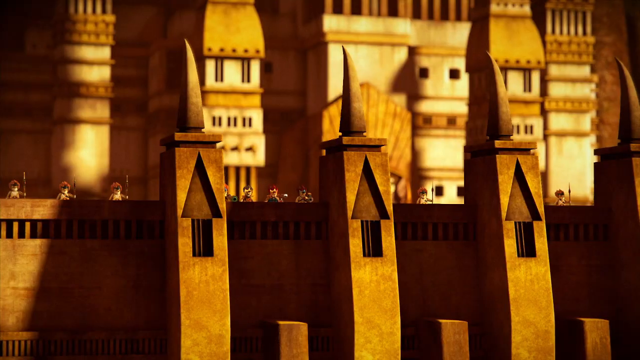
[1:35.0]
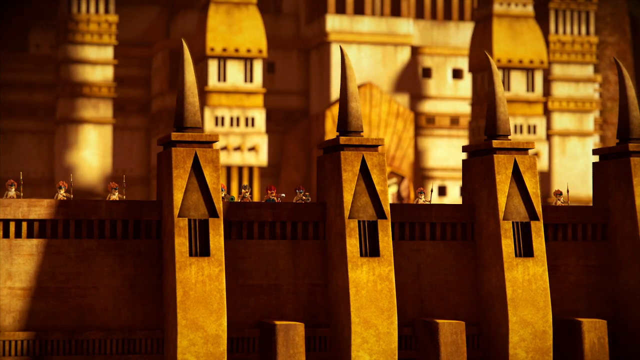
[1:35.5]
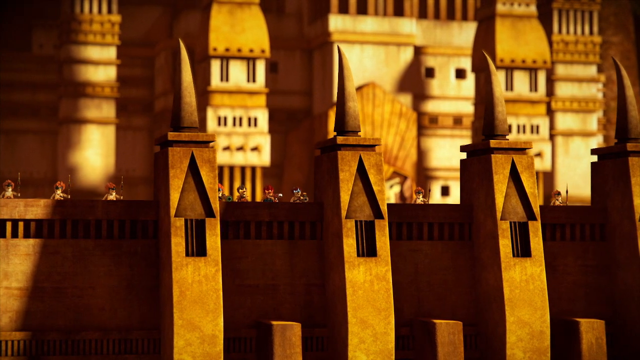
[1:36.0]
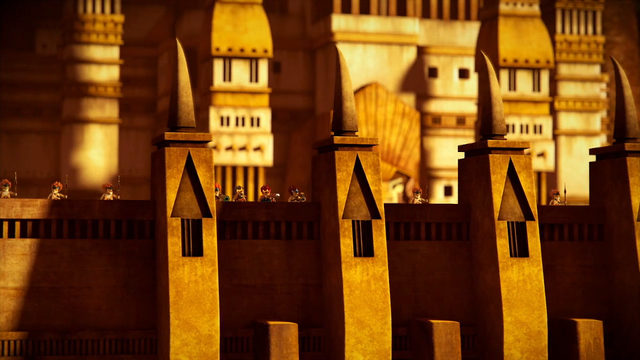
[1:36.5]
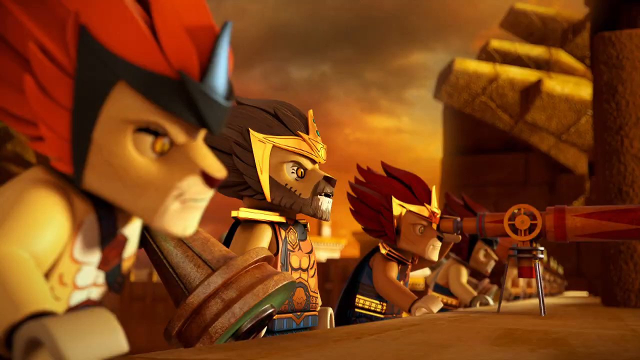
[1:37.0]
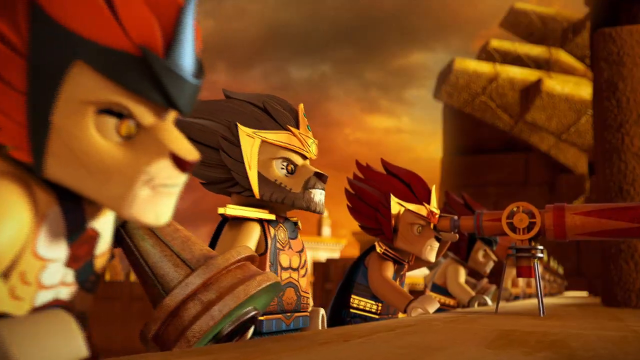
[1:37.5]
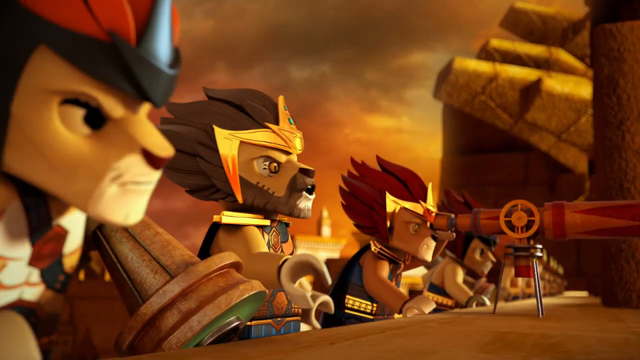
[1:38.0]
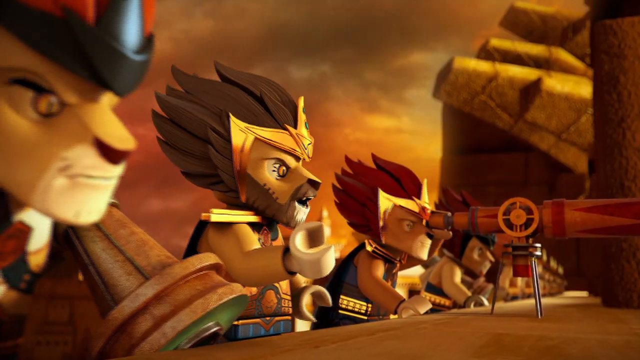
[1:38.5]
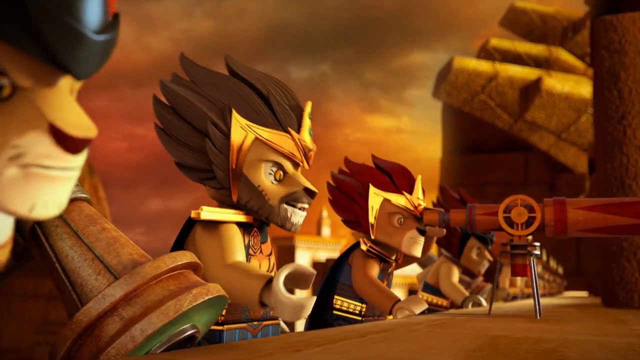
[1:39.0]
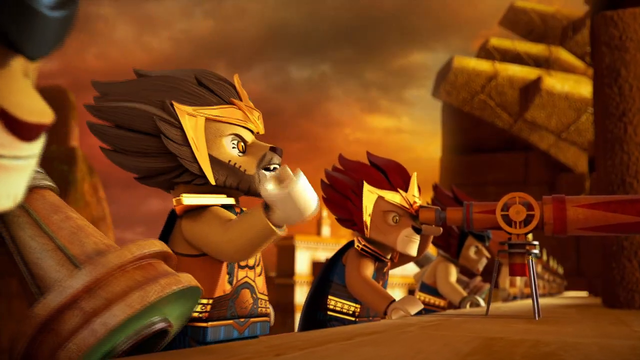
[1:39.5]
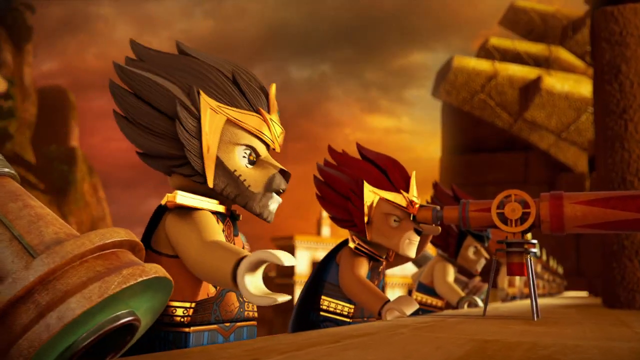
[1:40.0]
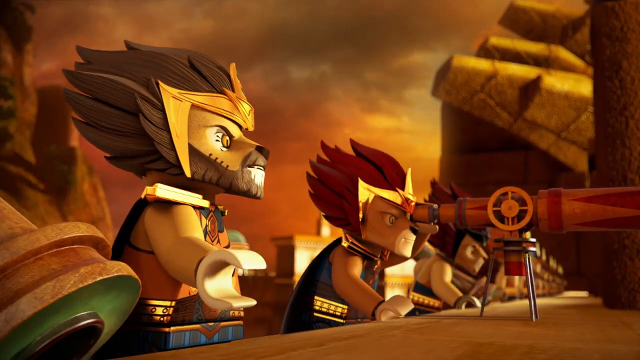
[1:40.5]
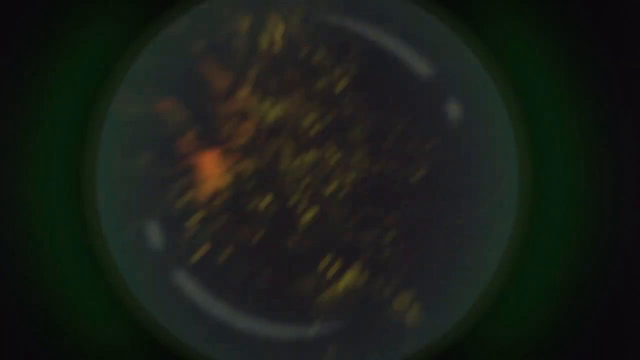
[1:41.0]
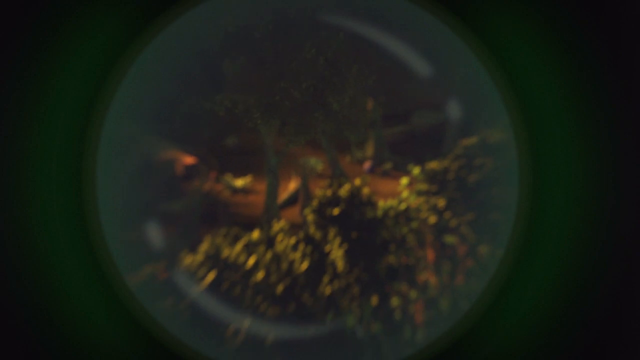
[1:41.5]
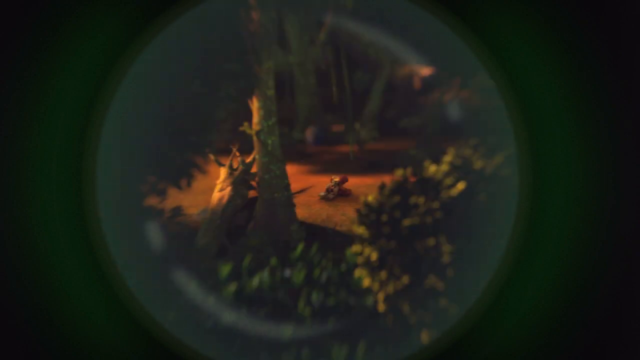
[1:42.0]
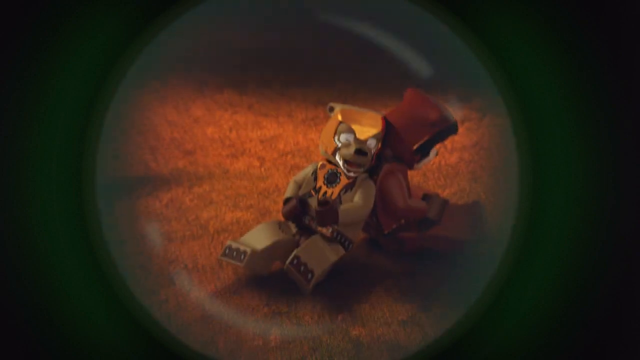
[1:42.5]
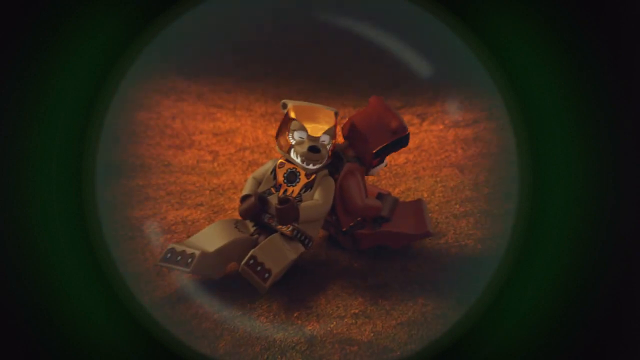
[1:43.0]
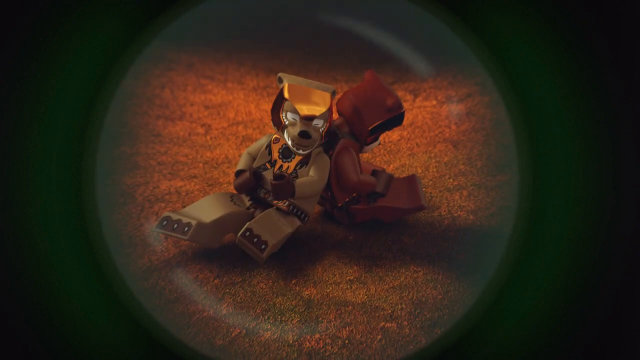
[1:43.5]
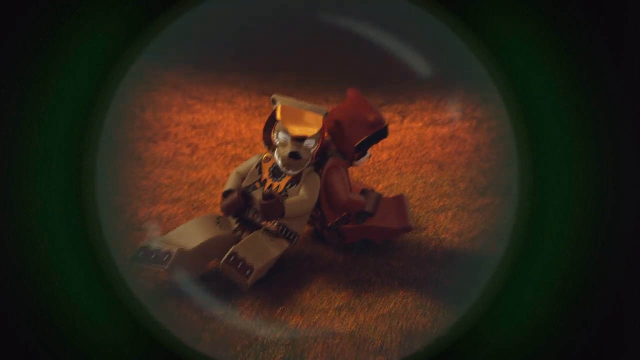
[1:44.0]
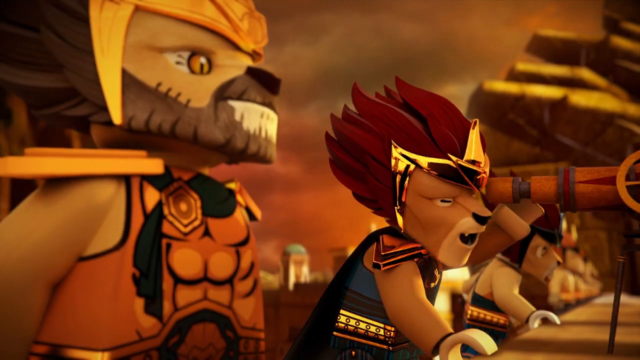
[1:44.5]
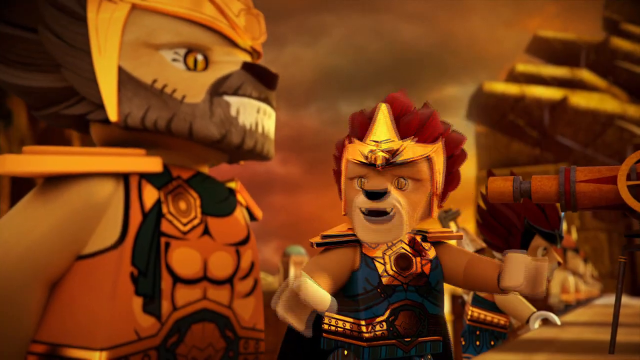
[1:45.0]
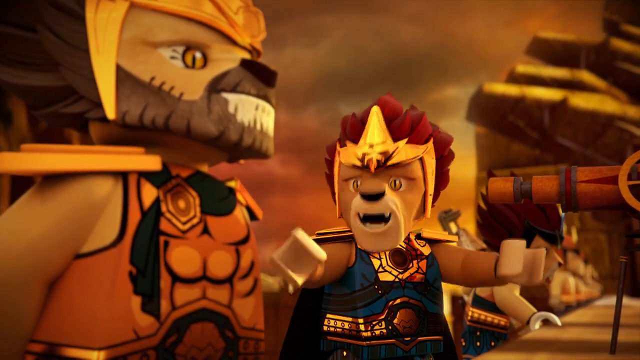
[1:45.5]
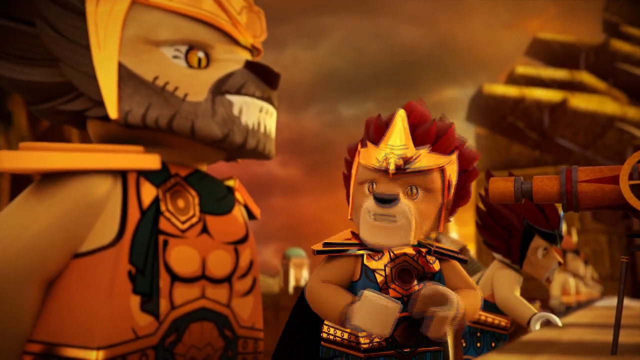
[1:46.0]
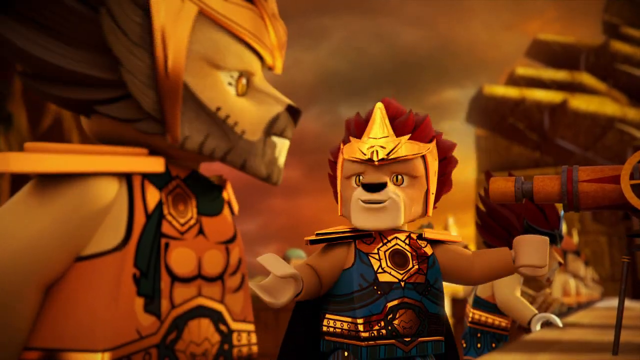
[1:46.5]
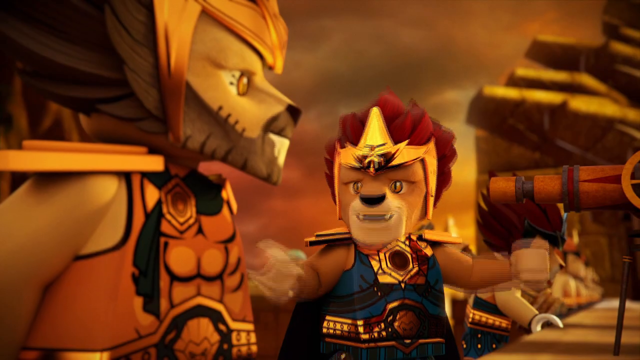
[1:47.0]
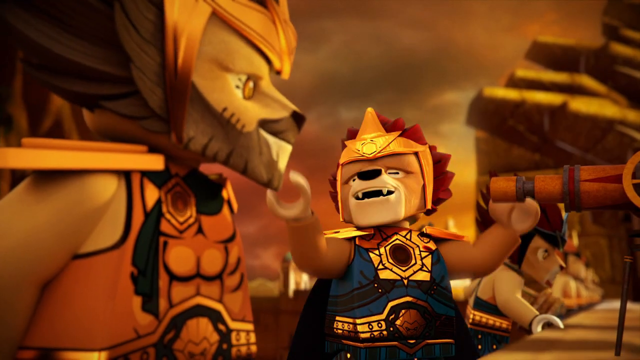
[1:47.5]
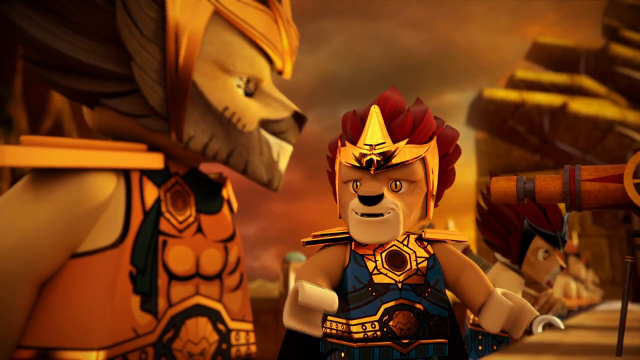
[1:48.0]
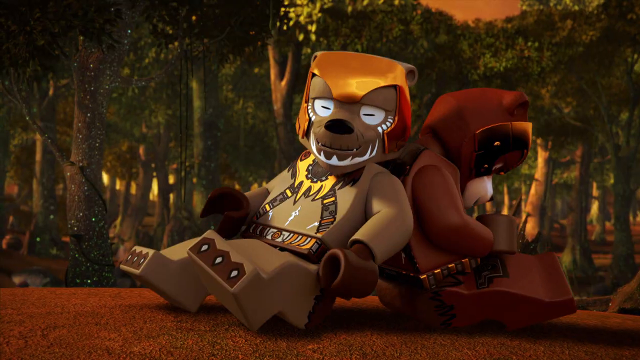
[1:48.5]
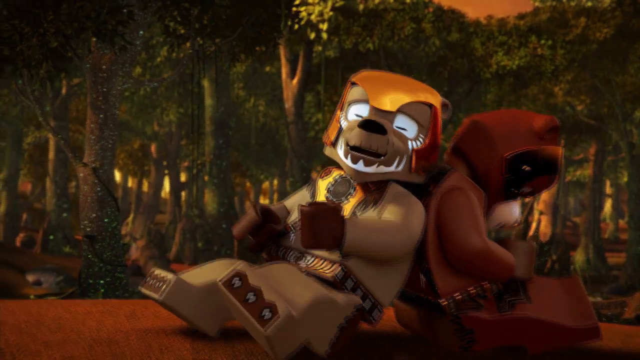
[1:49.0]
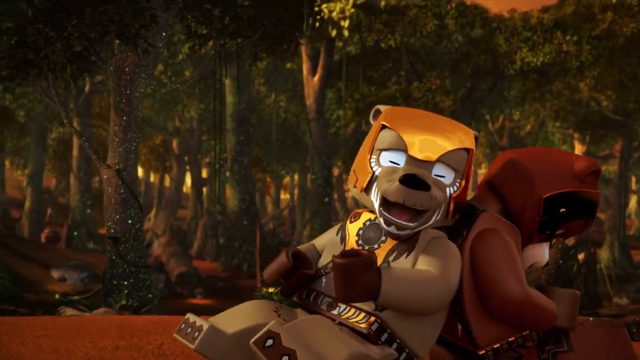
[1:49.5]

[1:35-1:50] The Lion Clan, all dressed in battle costumes, stands in a row on the perimeter of their castle walls. One of the lion lieutenants, with red hair and a golden star on his headwear, looks through a telescope on the ledge at the top of the castle wall into the distance. Through the lens he sees the two bears eating honey in the forest. He turns to the Lion King on his right to tell him what he sees, and the king smiles and nods. The castle walls are thick and strong, as if made of stone, with triangle decorations pointing to the sky. In the background are large golden castles with towers, small windows and columns.